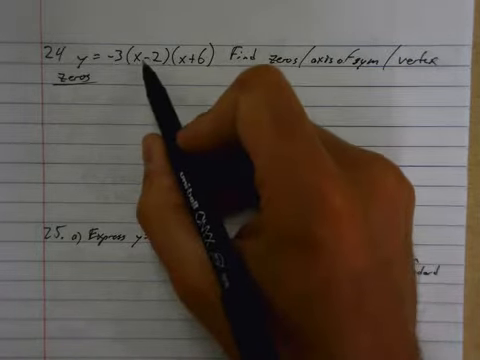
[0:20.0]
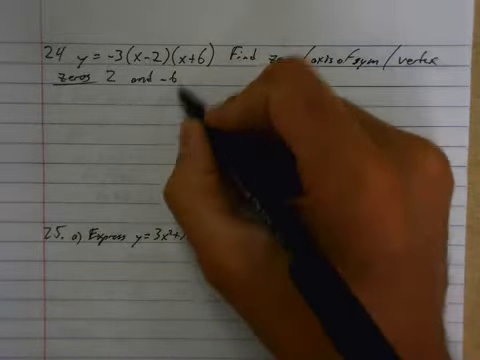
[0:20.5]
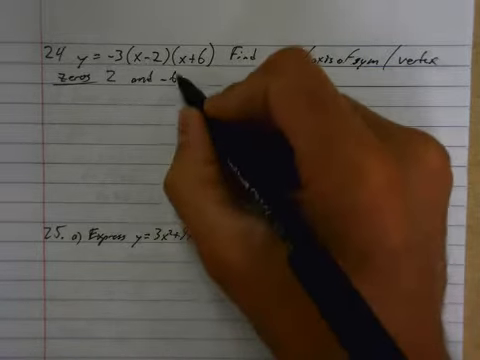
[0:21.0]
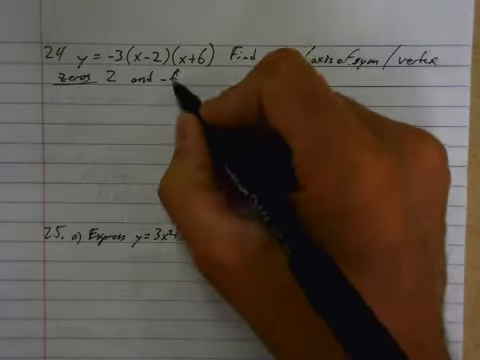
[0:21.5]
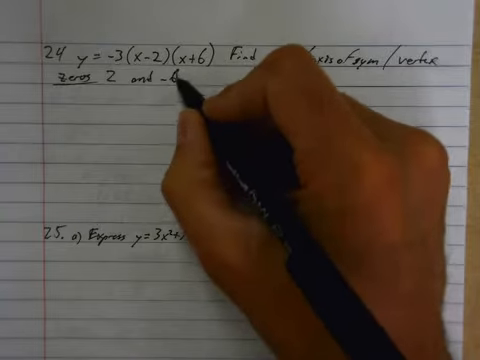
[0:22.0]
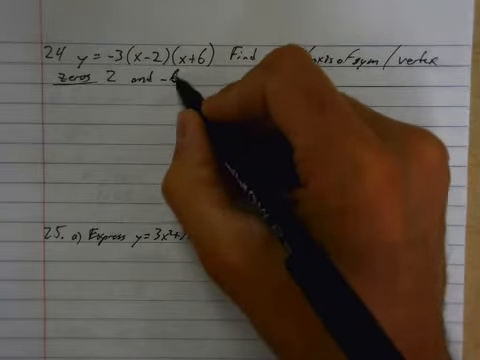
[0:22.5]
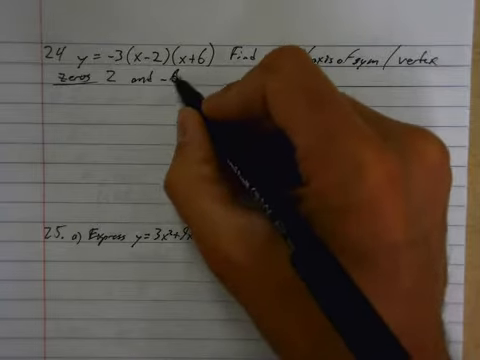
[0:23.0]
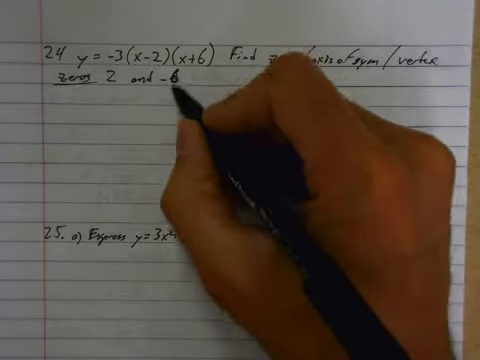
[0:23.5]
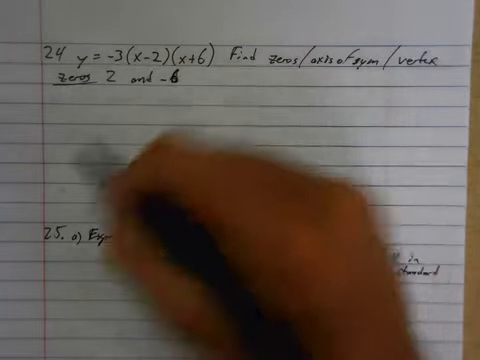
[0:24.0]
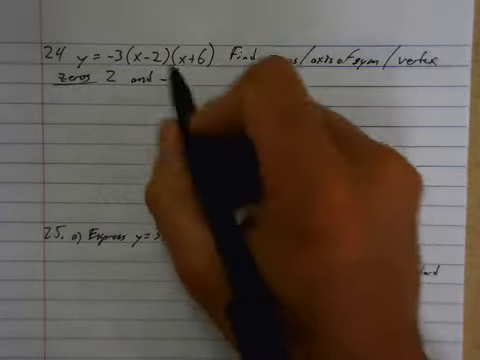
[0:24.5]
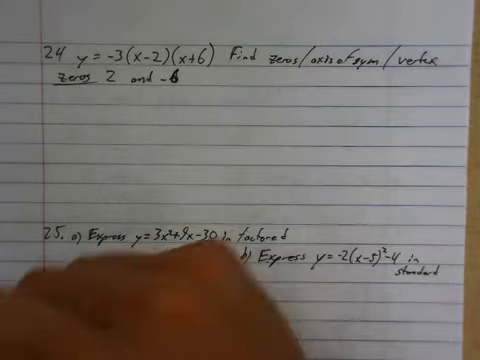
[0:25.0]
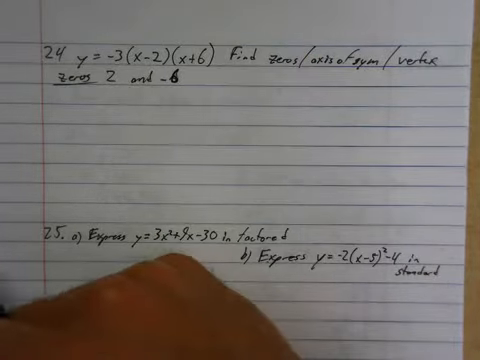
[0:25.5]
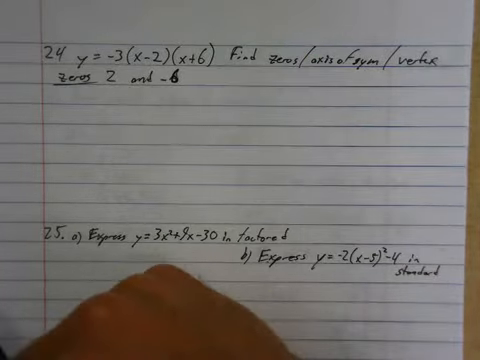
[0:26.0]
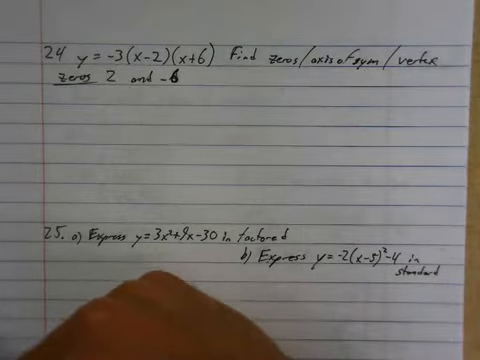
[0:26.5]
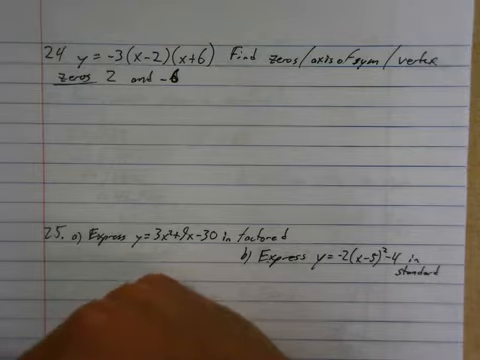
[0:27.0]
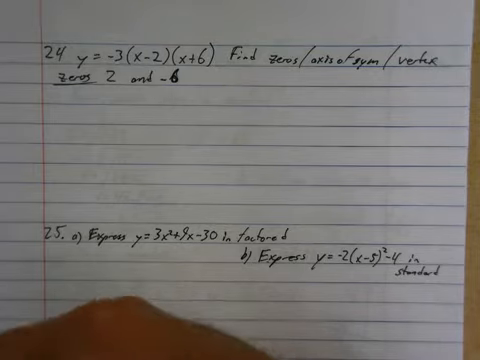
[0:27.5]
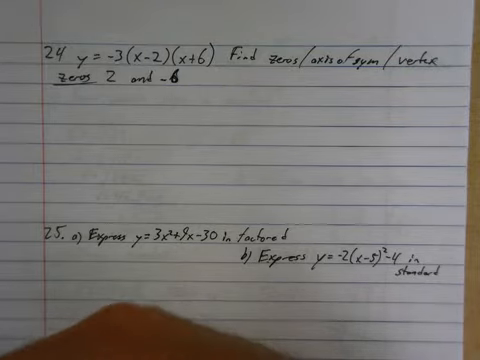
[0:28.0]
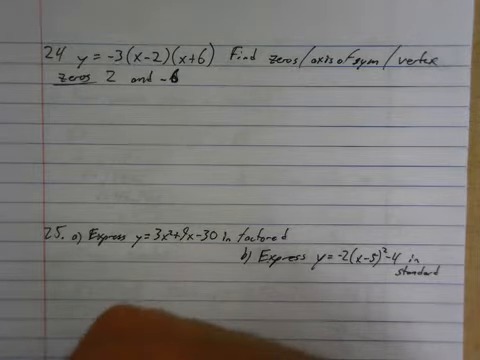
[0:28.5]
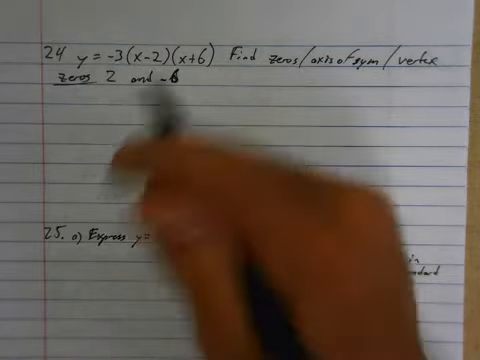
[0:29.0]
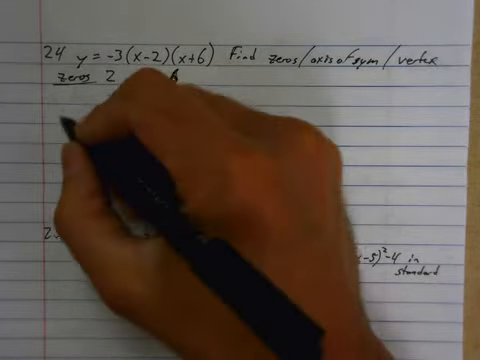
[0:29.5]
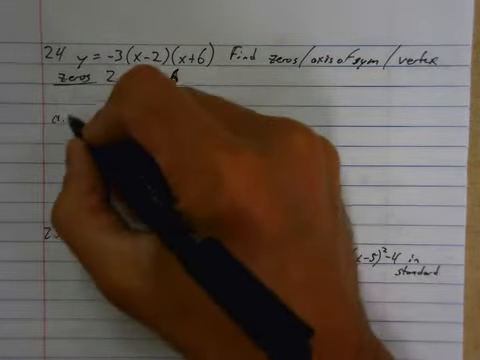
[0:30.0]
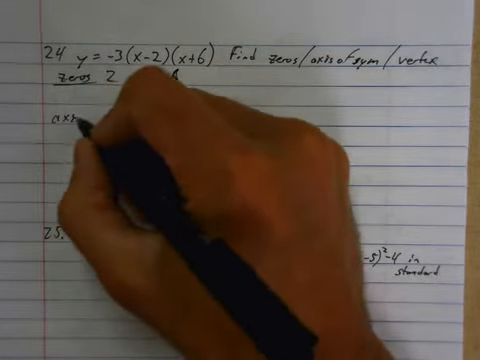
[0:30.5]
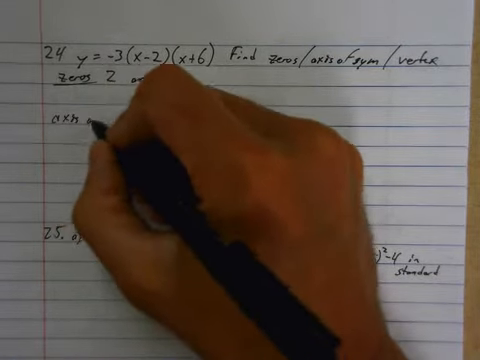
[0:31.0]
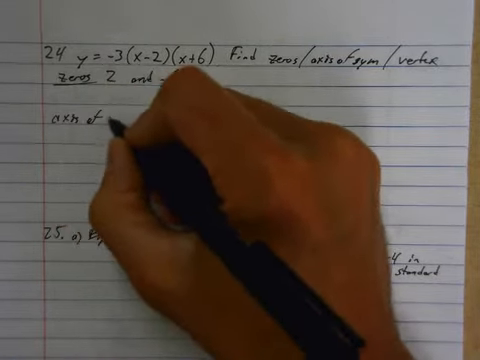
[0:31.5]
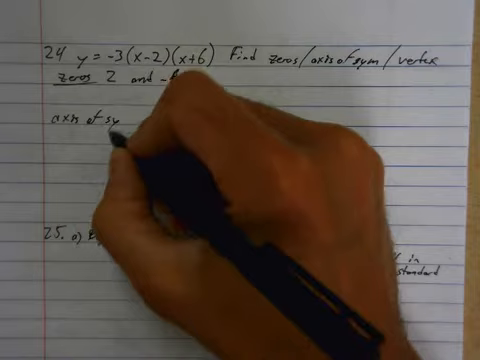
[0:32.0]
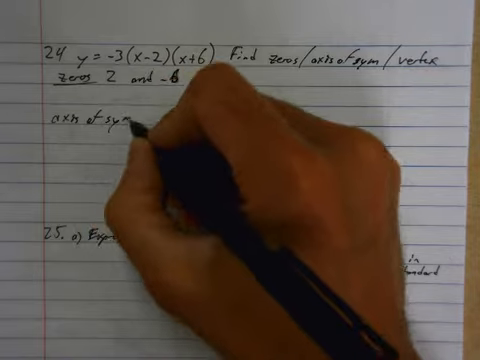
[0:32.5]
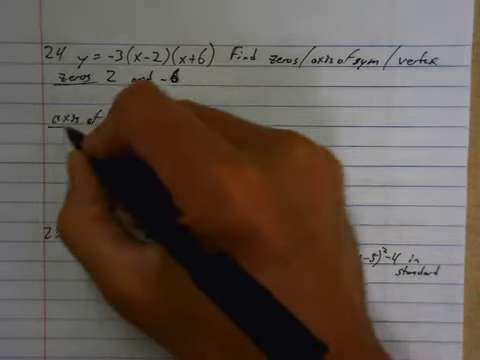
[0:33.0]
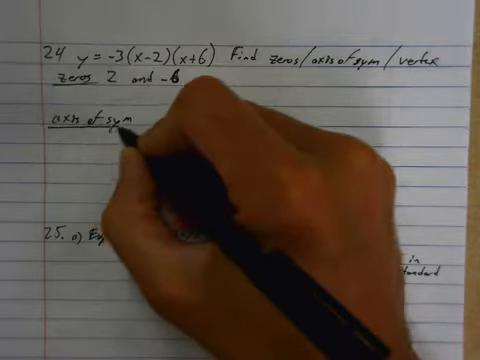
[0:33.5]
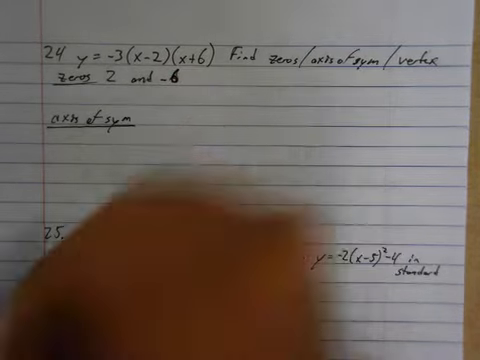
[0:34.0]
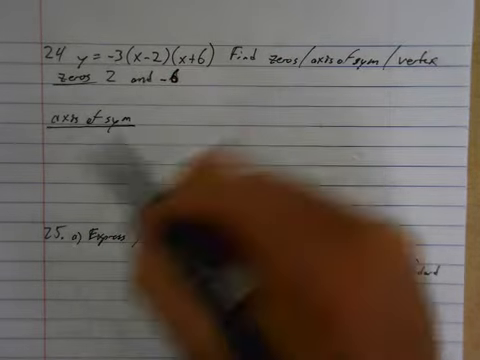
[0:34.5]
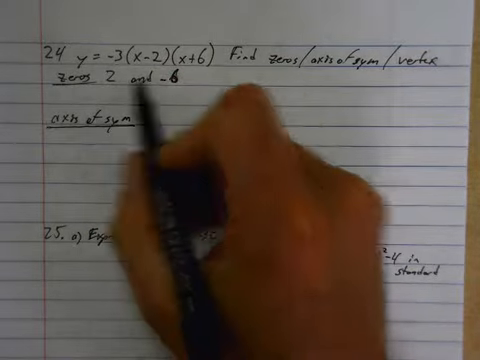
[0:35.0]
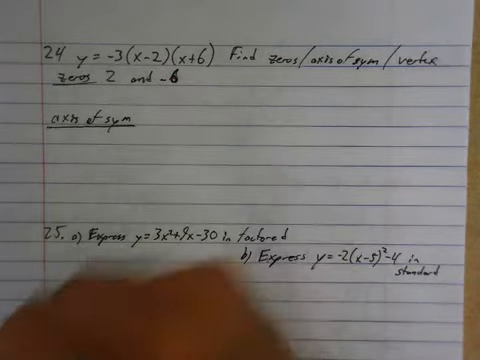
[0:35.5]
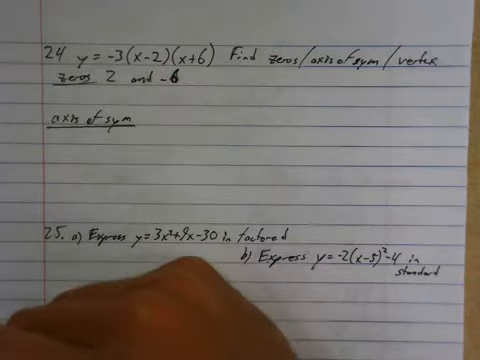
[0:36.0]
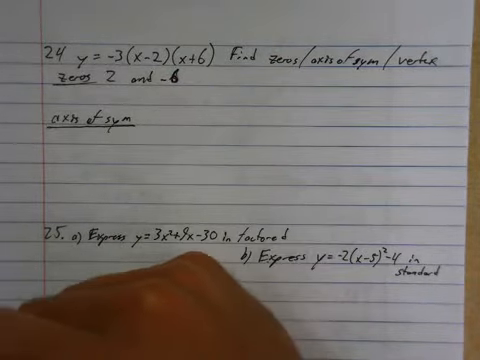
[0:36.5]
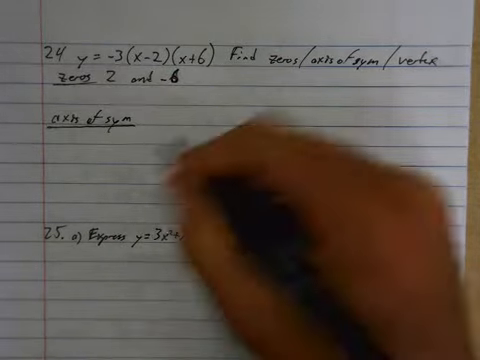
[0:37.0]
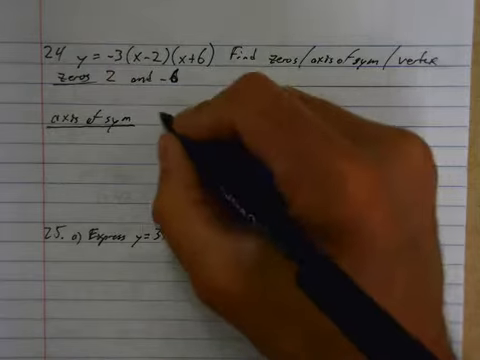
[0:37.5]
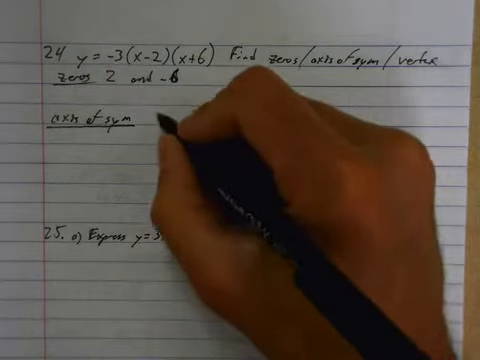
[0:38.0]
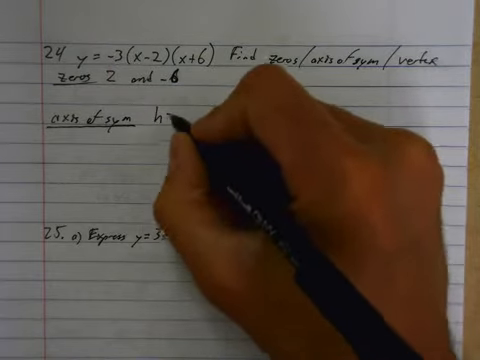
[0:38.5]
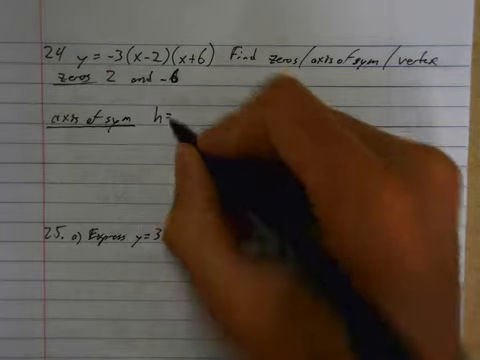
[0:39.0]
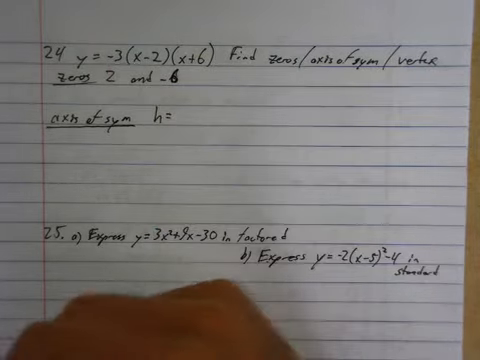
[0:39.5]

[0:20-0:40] A person holds a black pen, their right hand visible on top of a sheet of binder paper. The first line reads "24 y = -3(x - 2)(x + 6)", and on the right side it says "find zeros / axis of symmetry / b-e-r-f-u-s". Below 24 the word "zeros" is written and underlined. Lower on the page is "25" followed by more words. Under the underlined "zeros" the person writes 2 and -6, then below that writes "axis of symmetry" and underlines it, then continues with "h =". They keep adding more, apparently solving the problem on the sheet of paper.